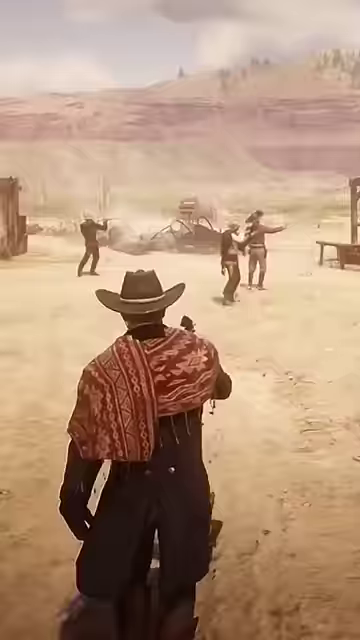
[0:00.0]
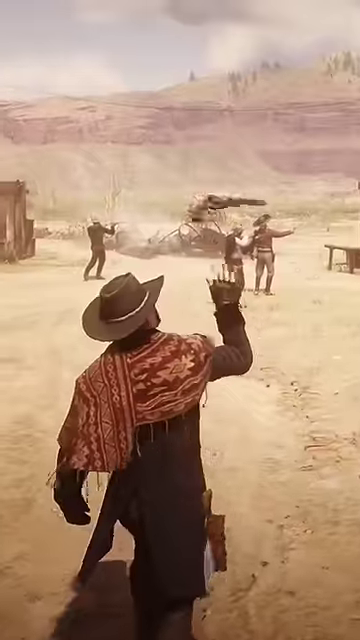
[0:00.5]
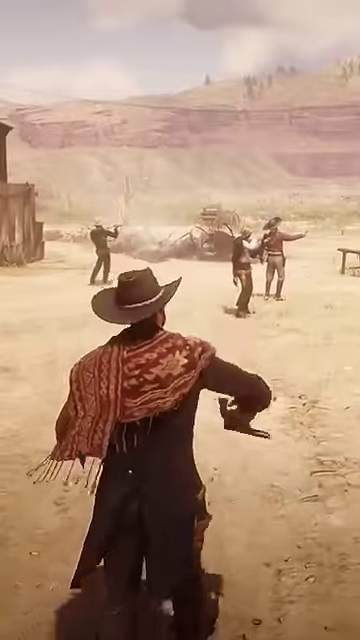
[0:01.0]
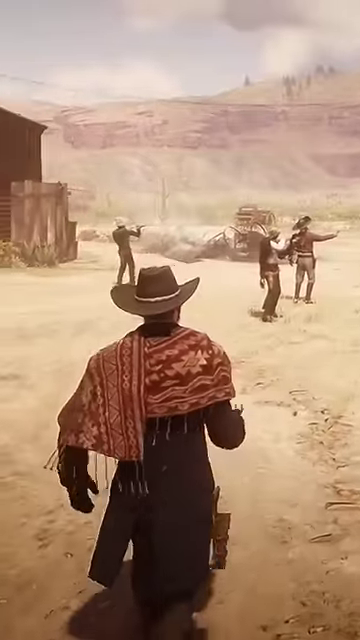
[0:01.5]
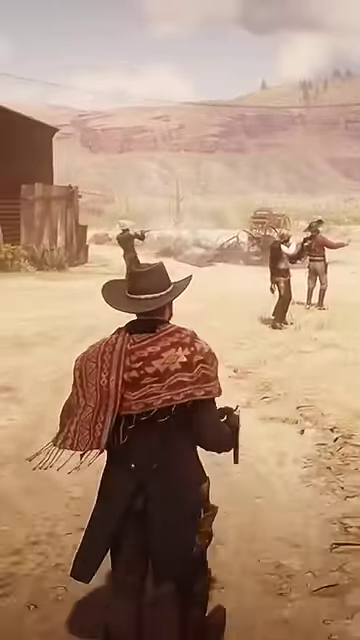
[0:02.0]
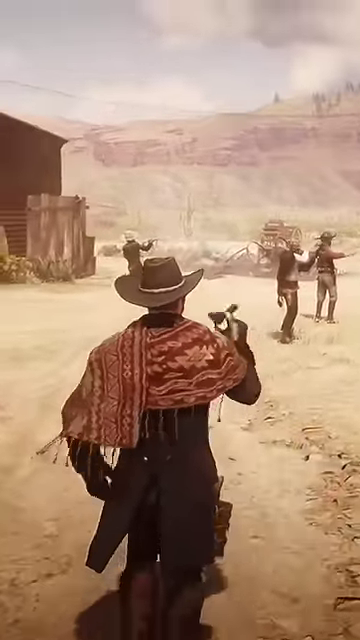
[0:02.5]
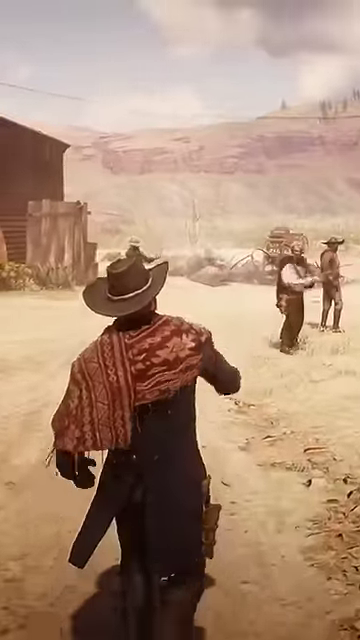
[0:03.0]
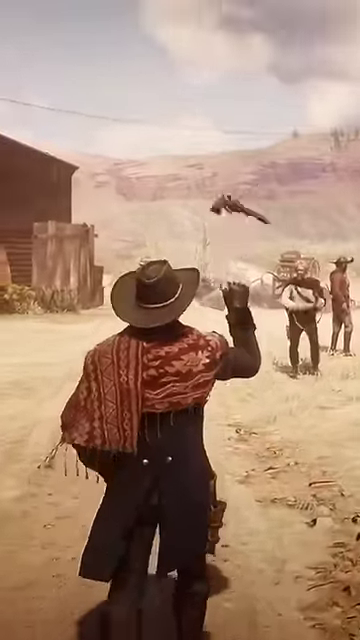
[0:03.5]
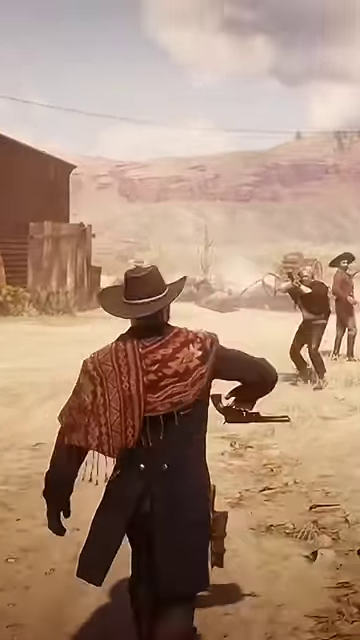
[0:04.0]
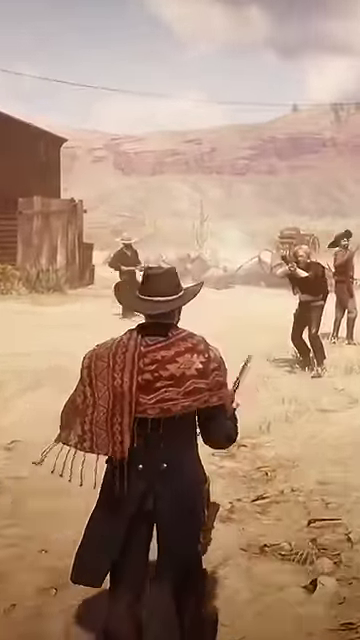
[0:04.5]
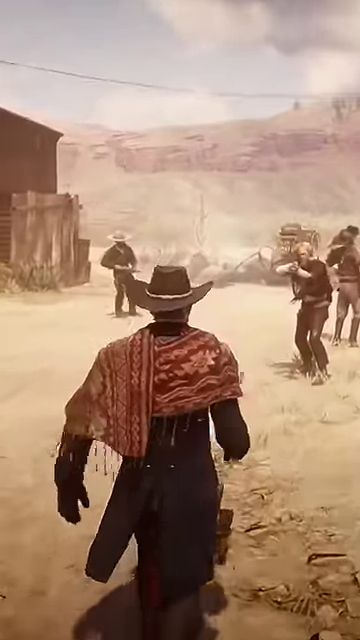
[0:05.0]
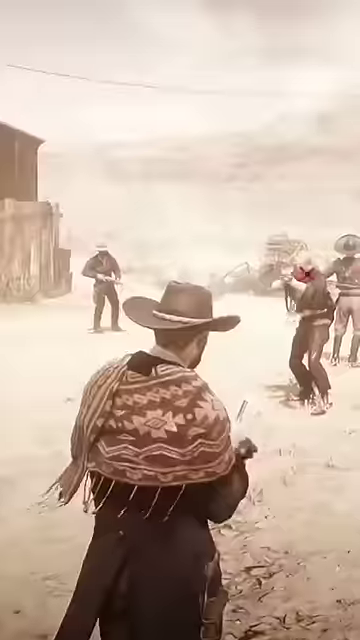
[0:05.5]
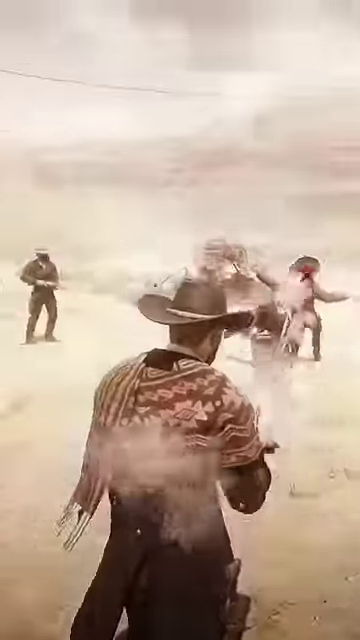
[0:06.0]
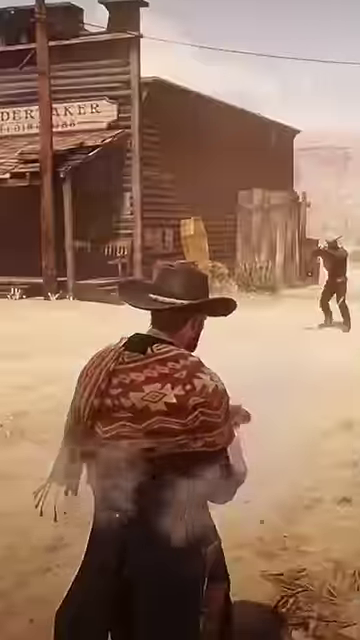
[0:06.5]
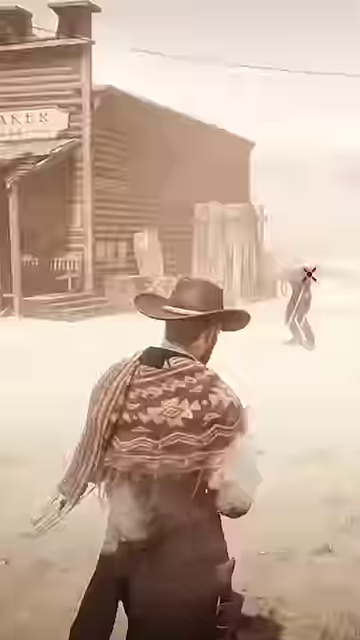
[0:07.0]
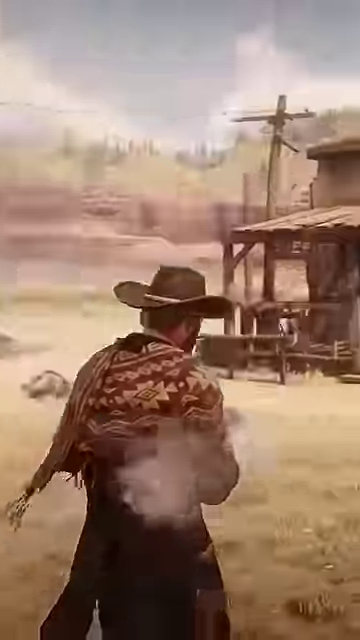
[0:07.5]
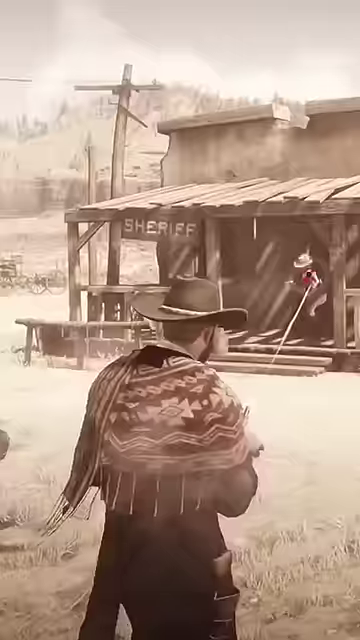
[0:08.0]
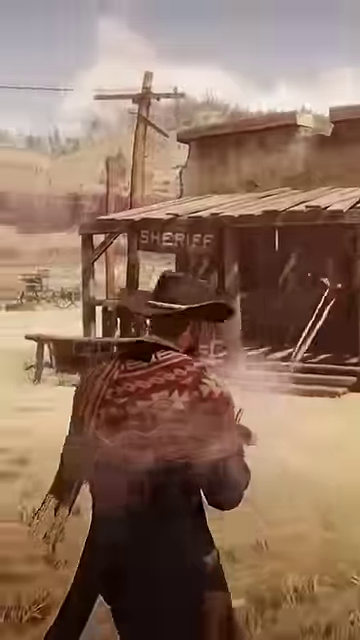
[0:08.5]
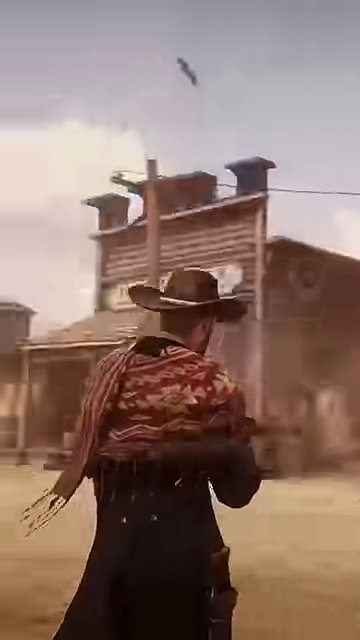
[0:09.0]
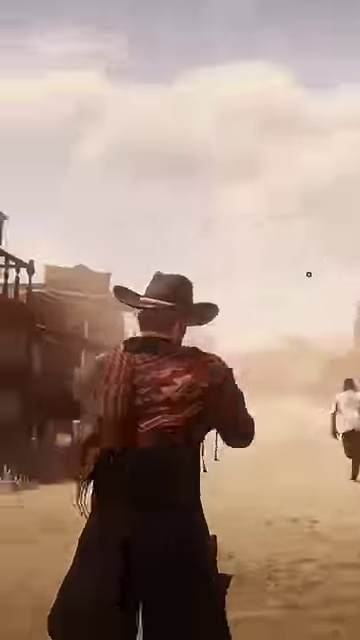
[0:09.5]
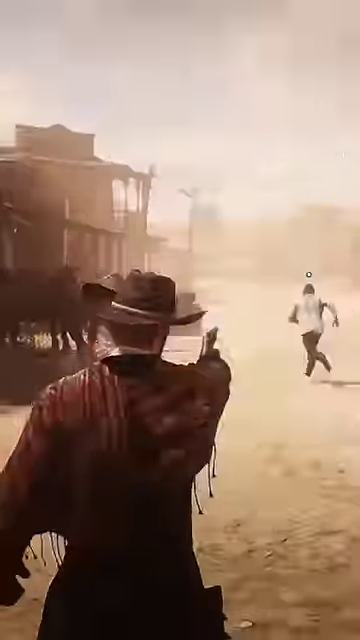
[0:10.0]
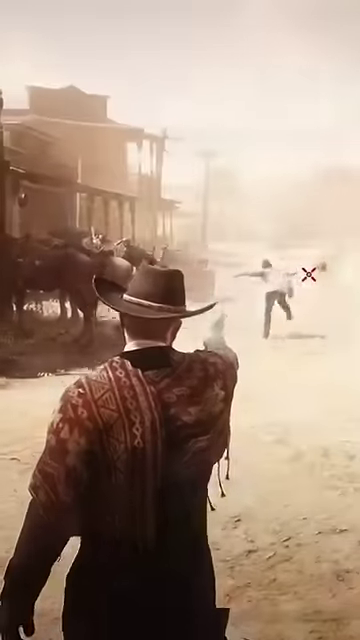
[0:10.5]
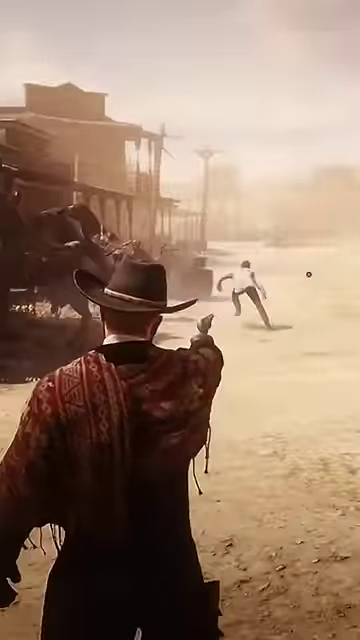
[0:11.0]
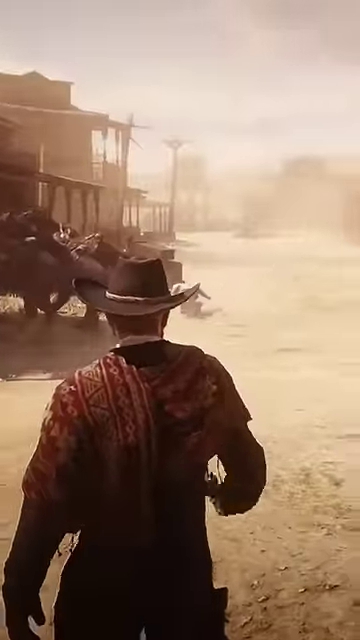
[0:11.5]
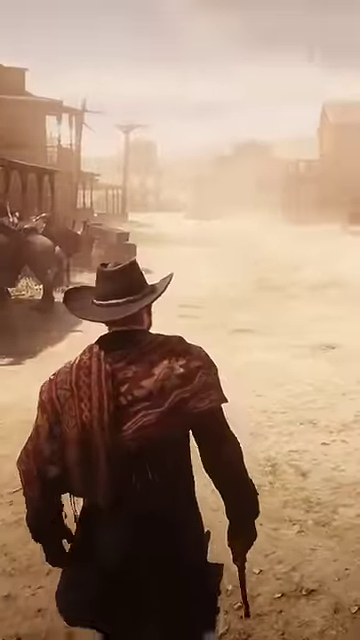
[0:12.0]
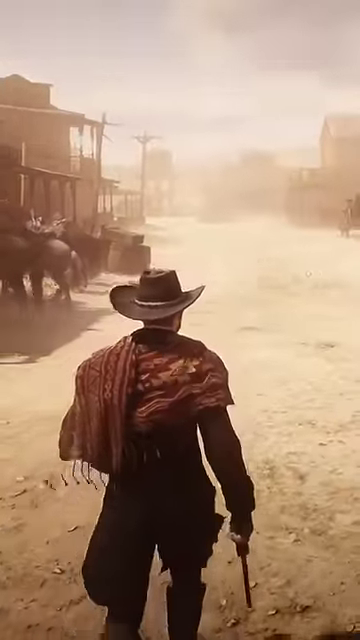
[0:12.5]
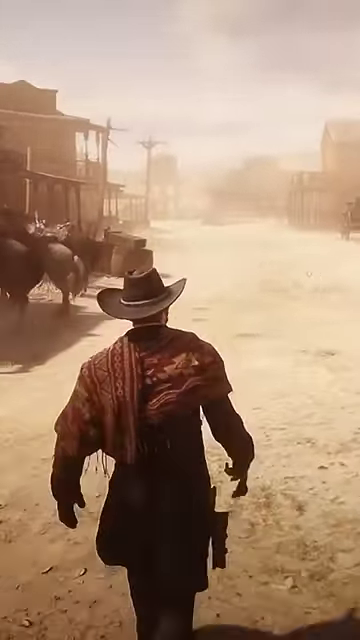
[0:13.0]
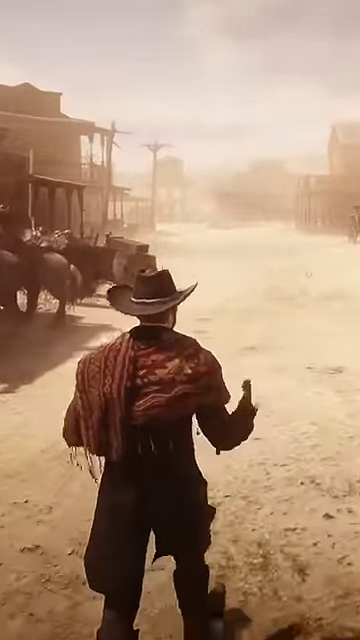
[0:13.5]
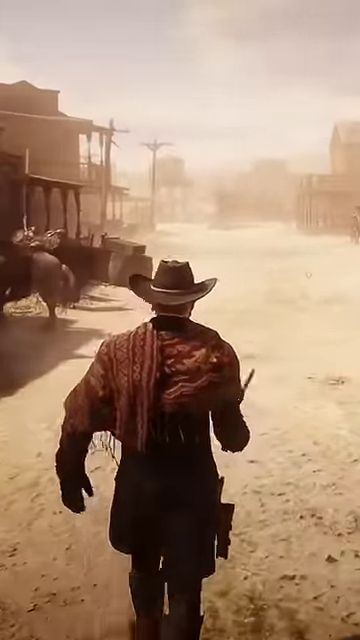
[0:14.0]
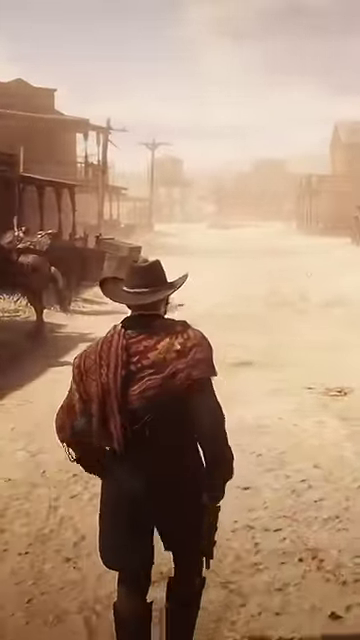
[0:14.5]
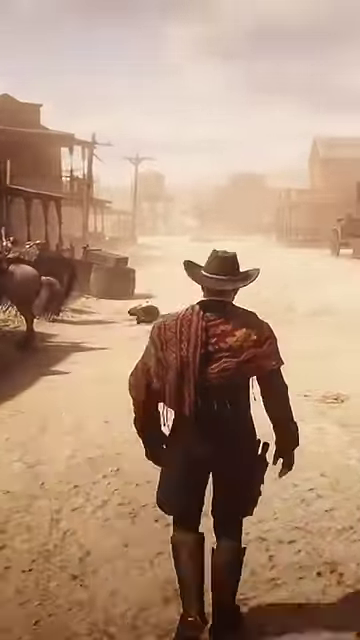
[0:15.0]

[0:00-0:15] A western-themed video game shows a cowboy walking away from the camera toward some other cowboys. His back is to the camera; he has on a cowboy hat, wears a long coat, and has a brown and gold shawl wrapped around his shoulders. Wooden shacks and buildings are in the background. Beside a wooden shack, two other cowboys shoot at the cowboy as he advances toward them, but the bullets do not hit him; instead he shoots down the other cowboys. One of them starts to run away, and the cowboy shoots him in the back, and he falls down beside the horses. Dust is visible in the air. The game looks very realistic, almost like real footage or a film with human actors. The cowboy who did the shooting walks confidently, twirls his gun with his right hand, and expertly puts it back into the holster.